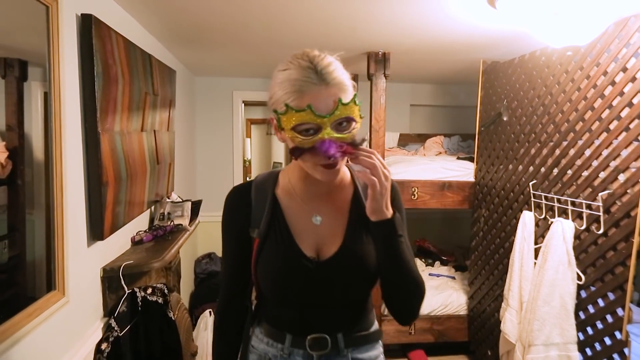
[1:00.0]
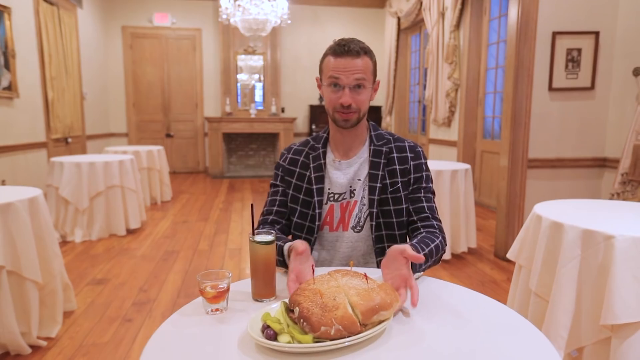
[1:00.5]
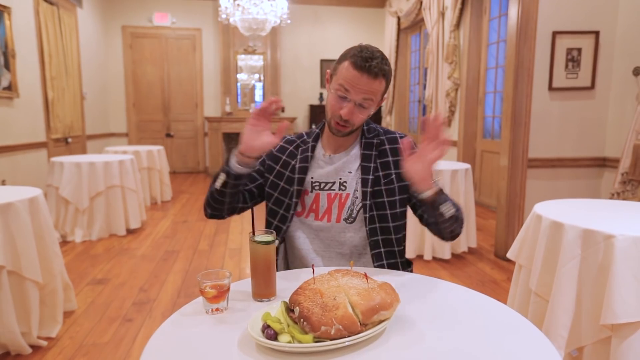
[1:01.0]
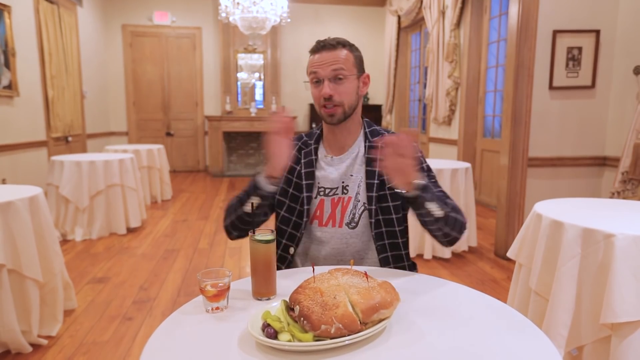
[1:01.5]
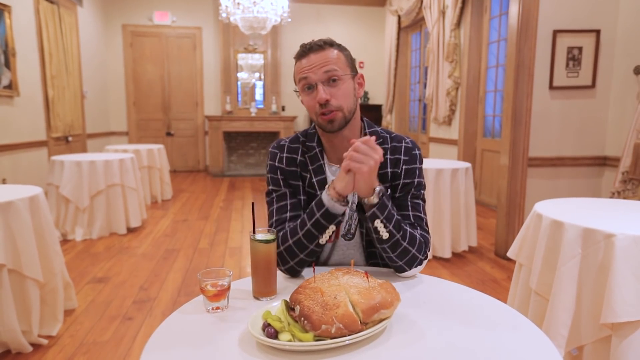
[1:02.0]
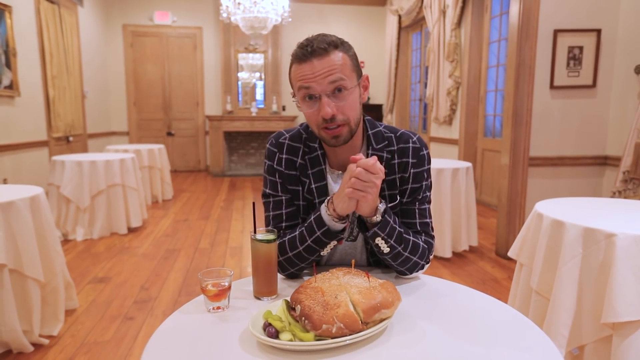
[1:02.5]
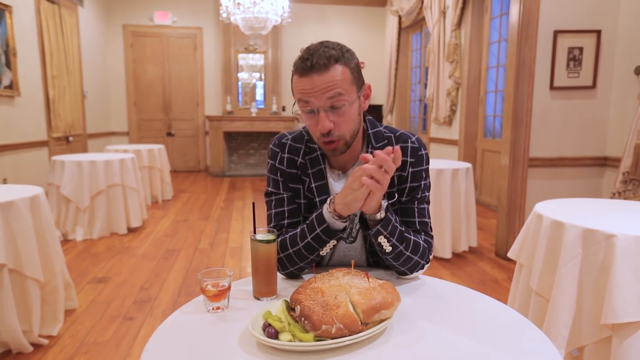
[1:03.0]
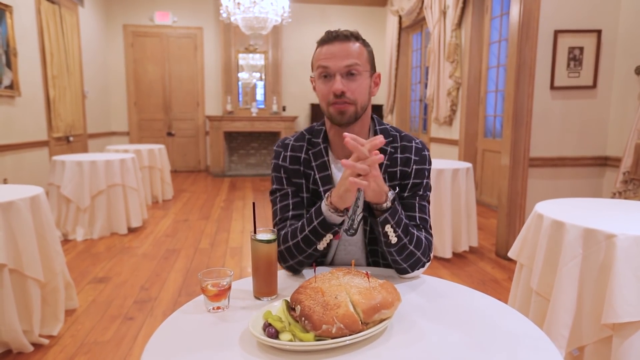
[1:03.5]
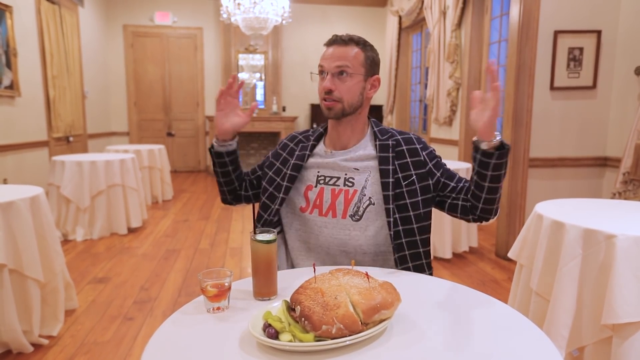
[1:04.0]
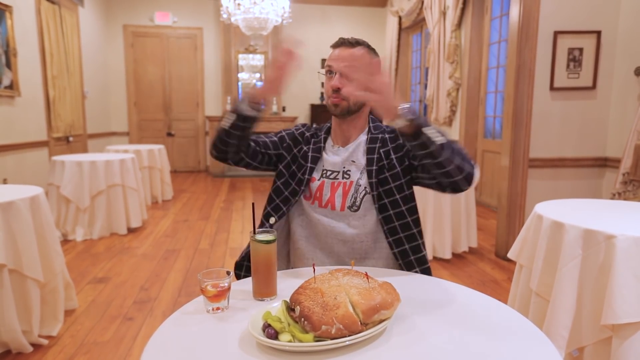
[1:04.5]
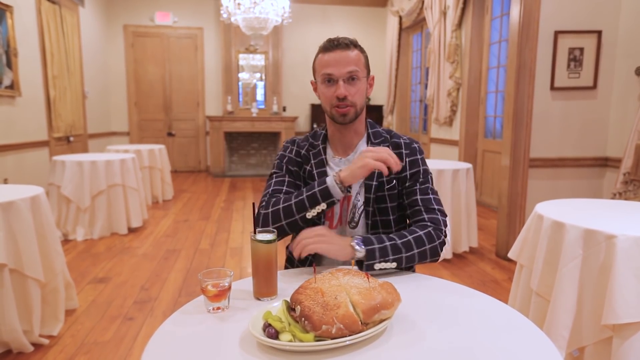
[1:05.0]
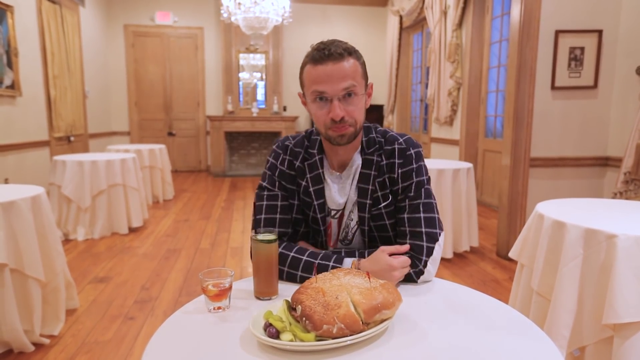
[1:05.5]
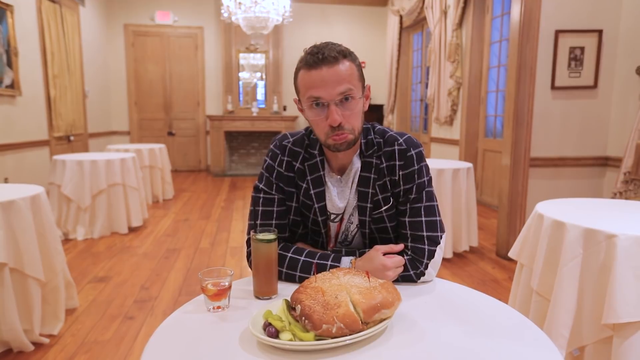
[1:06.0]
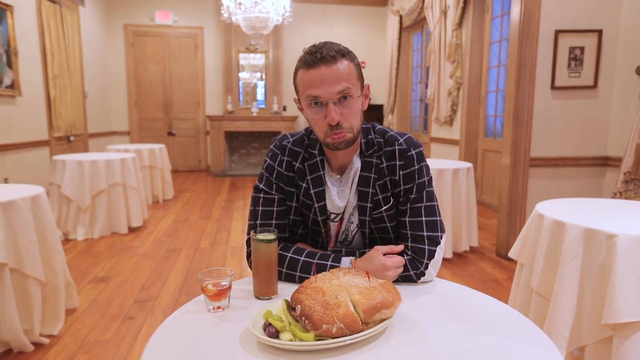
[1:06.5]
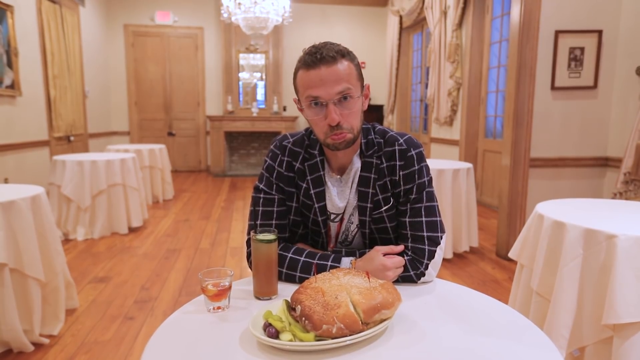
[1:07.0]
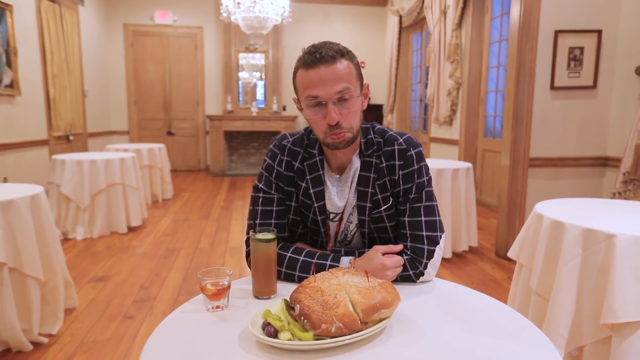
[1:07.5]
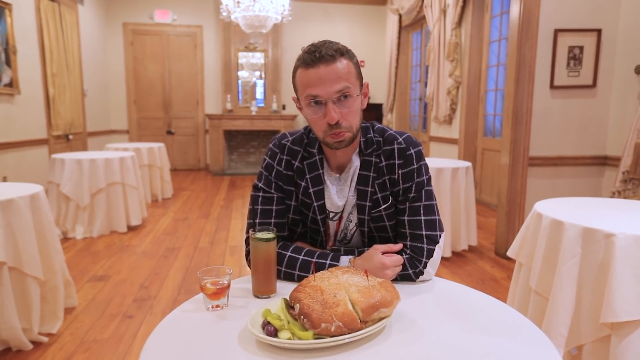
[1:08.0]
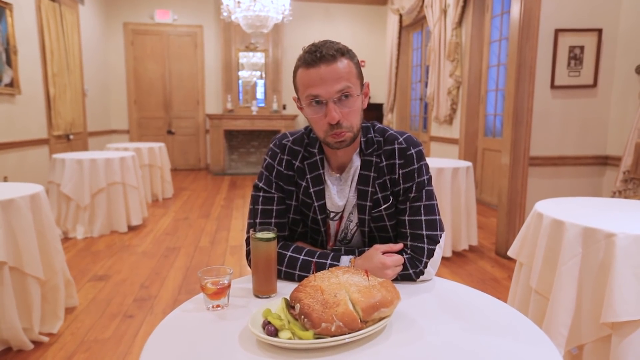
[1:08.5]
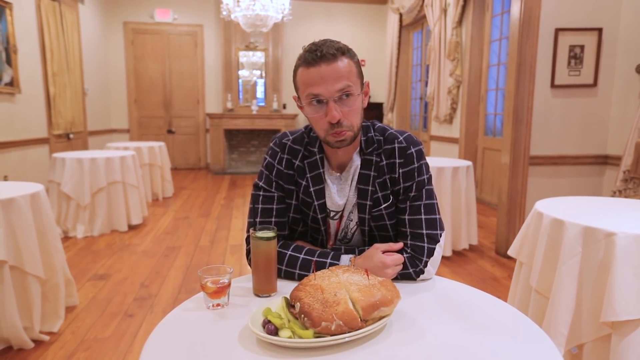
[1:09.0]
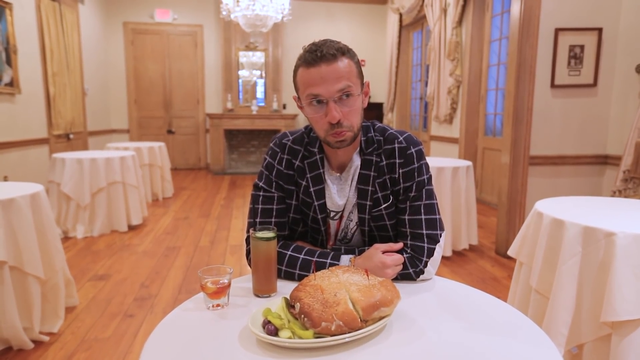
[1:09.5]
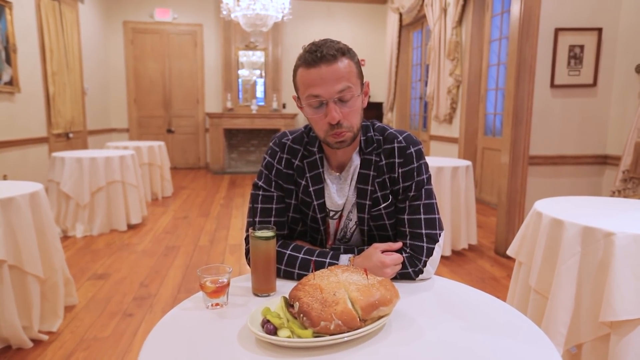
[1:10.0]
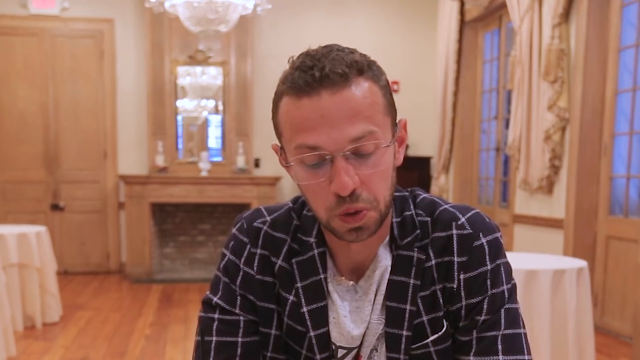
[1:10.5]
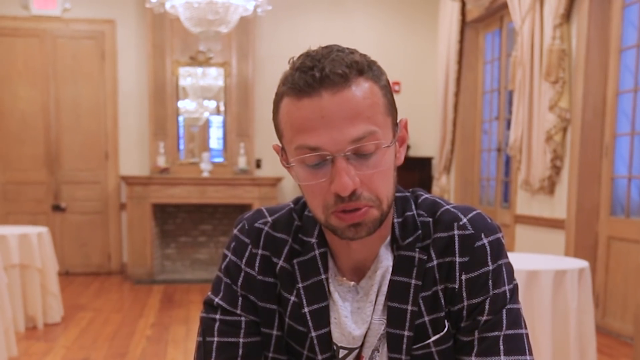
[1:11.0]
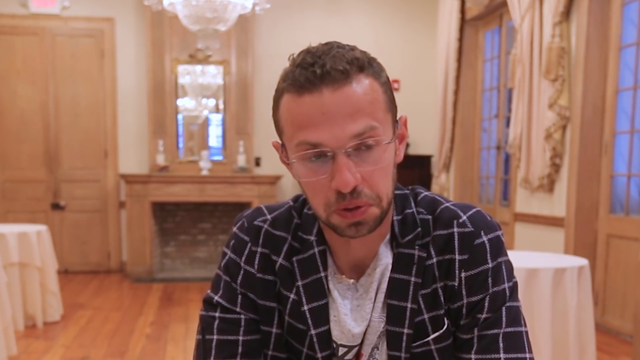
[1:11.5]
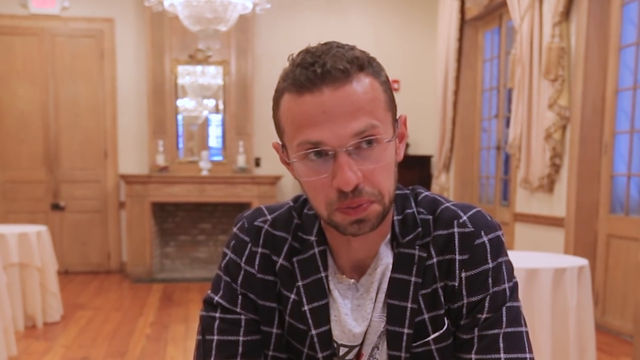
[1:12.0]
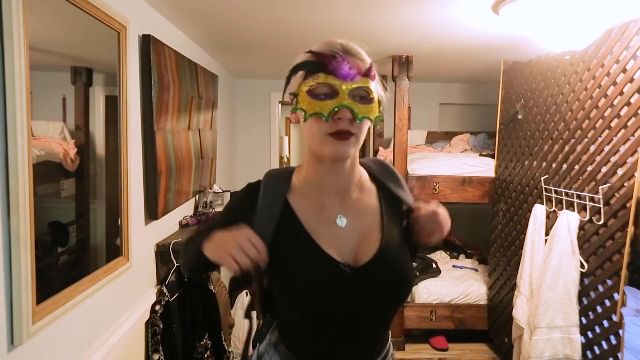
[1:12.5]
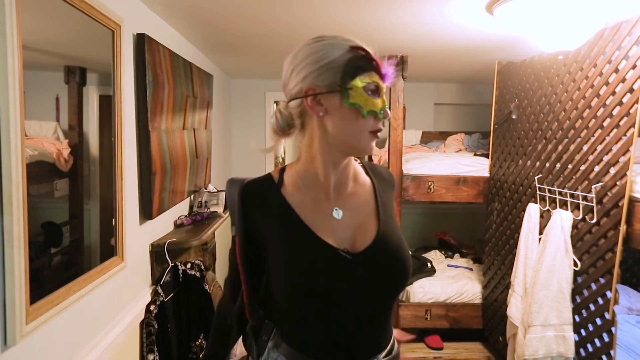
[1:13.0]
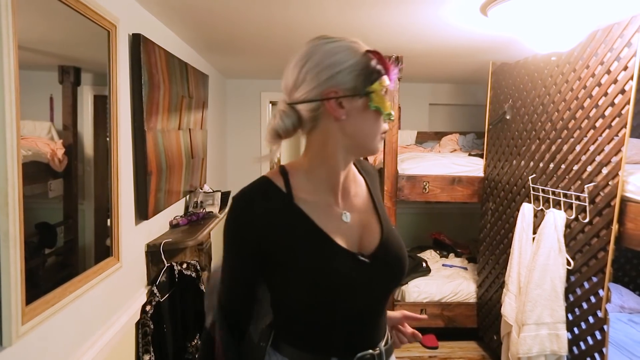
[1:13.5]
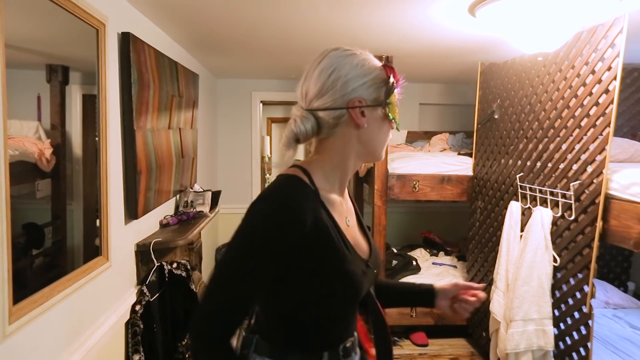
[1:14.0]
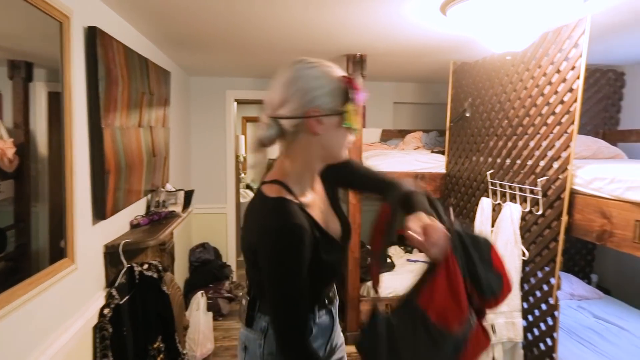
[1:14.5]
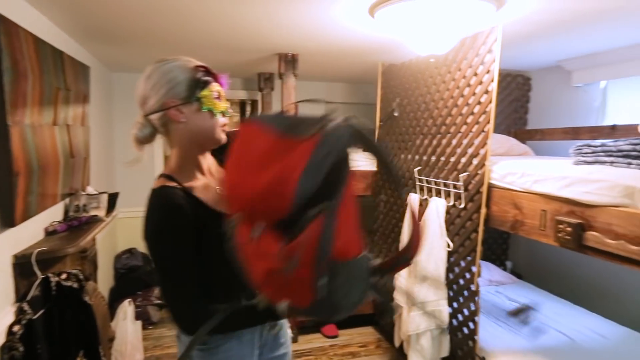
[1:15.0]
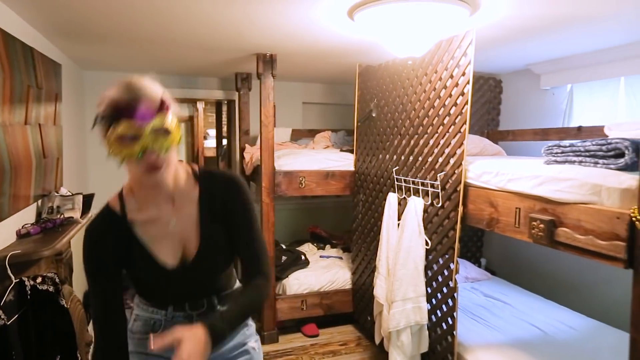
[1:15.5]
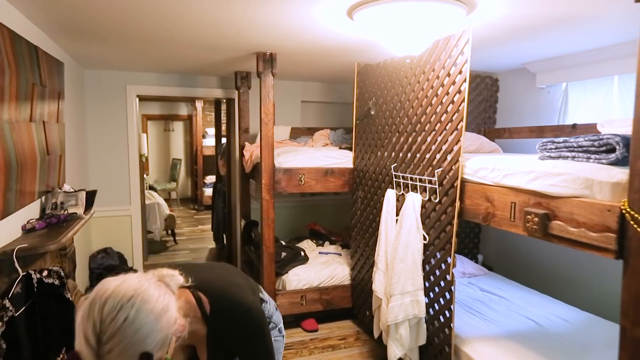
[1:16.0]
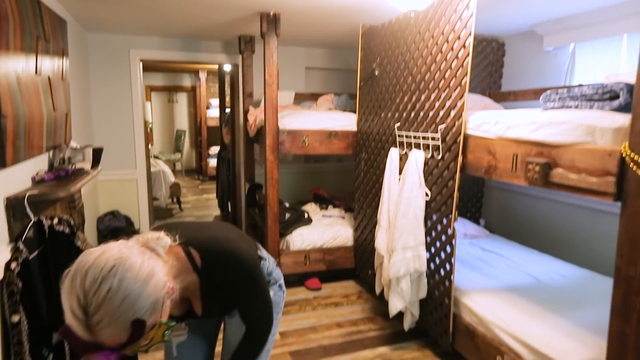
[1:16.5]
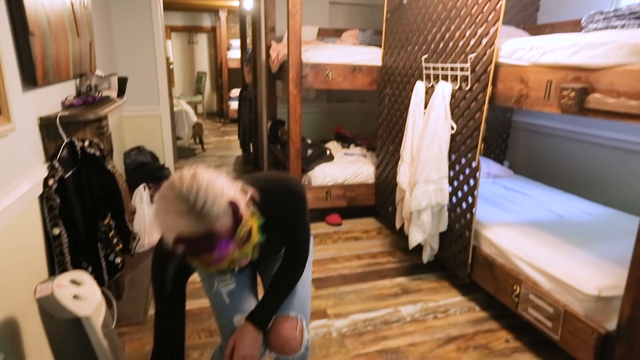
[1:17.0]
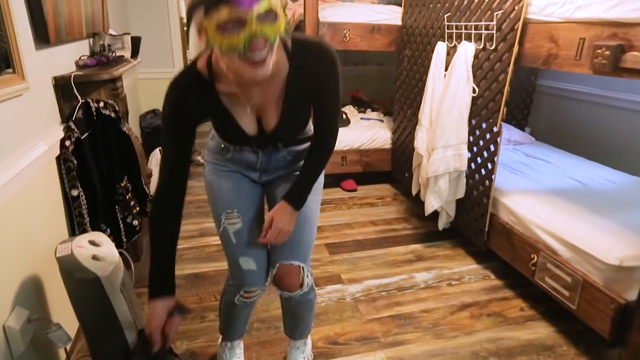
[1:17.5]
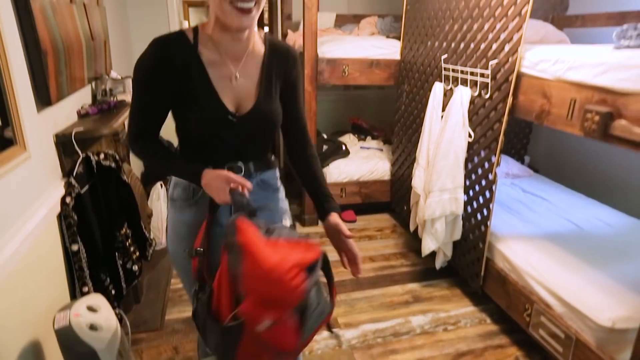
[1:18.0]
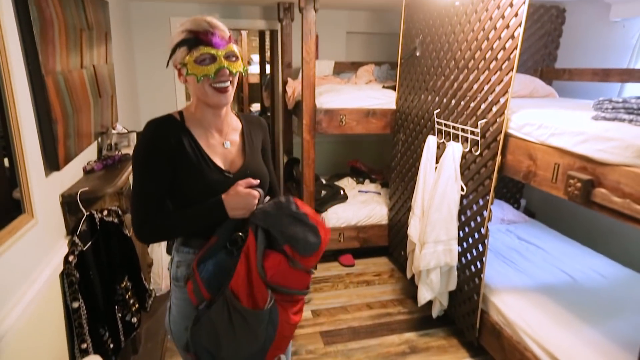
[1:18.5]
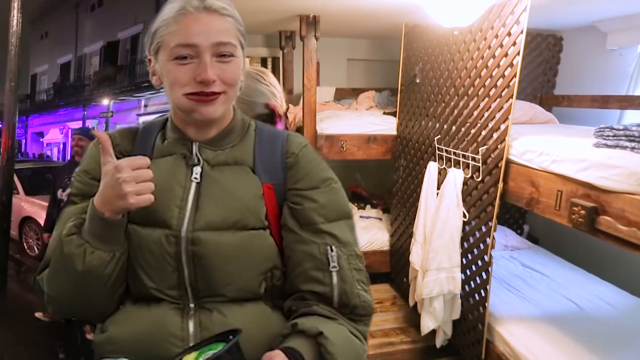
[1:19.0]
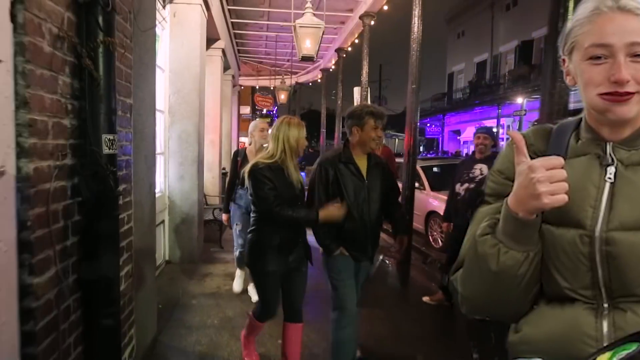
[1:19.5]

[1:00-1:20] In a quick scene, a woman in a long-sleeve black shirt wears a colorful, mostly yellow mask and looks at the camera. The scene quickly changes to a man who appears to be in his mid-30s, with short brown hair, a short brown beard and glasses, wearing a t-shirt and a navy blue plaid shirt with white stripes. He is seated at a table with a white tablecloth in a room with lots of tables, and no one else is in the room. In front of him on the table are some food and two drinks; he talks to the camera and looks at the food. The woman then appears in a hotel room with bunk beds in the background and, to her side, a bronze wall with two white towels hanging on hooks. She wears a very colorful mask with a lot of yellow on it and picks up a red backpack. Briefly, the man and the woman are then shown at night walking along a street or a sidewalk along a street.